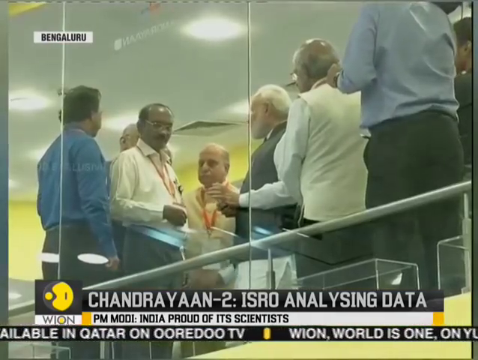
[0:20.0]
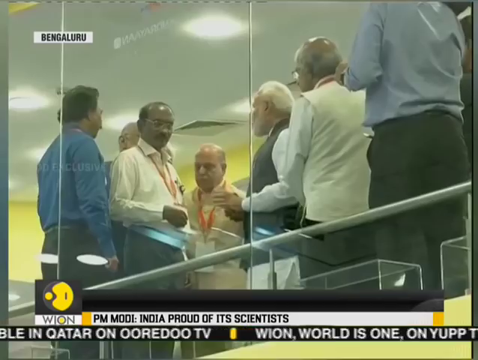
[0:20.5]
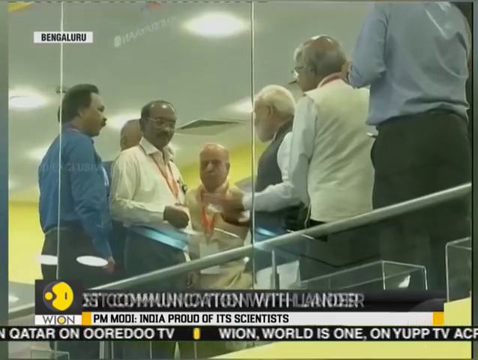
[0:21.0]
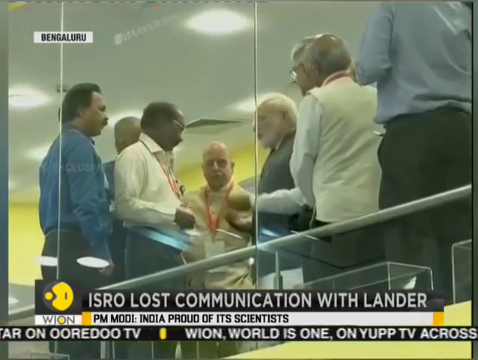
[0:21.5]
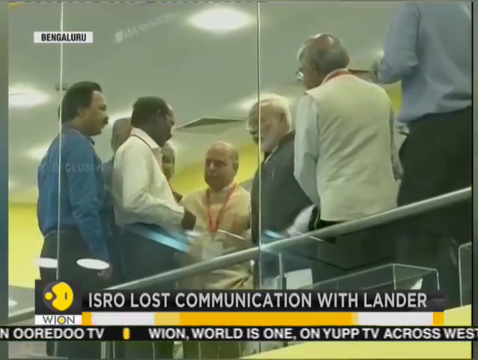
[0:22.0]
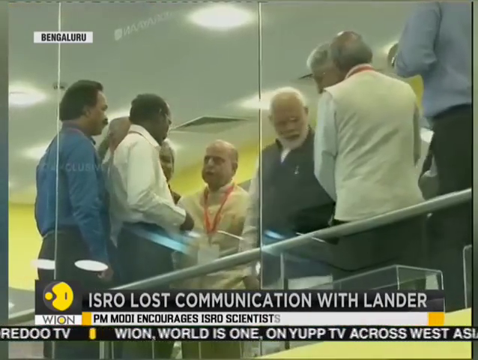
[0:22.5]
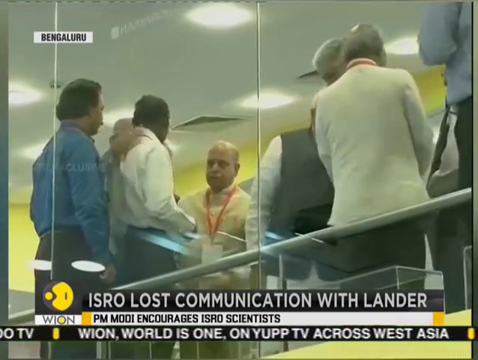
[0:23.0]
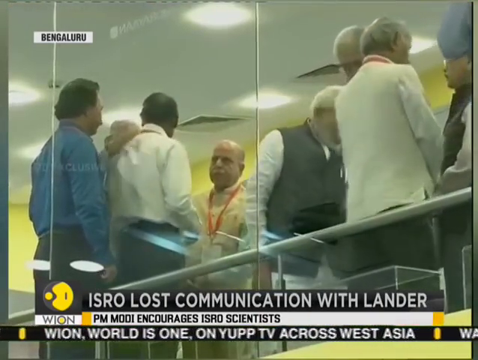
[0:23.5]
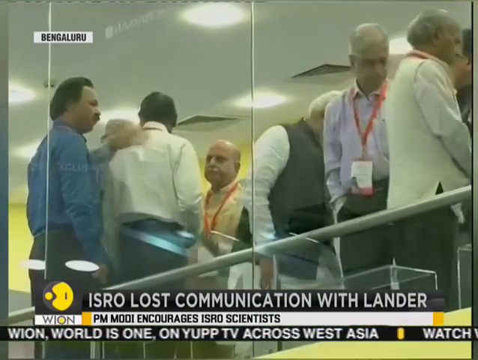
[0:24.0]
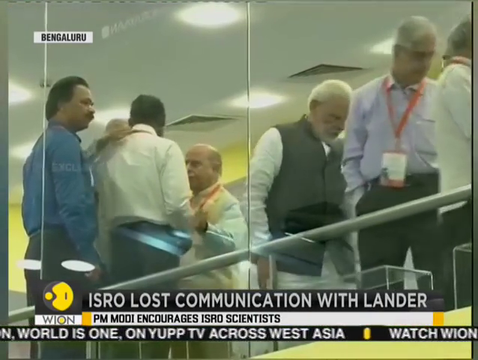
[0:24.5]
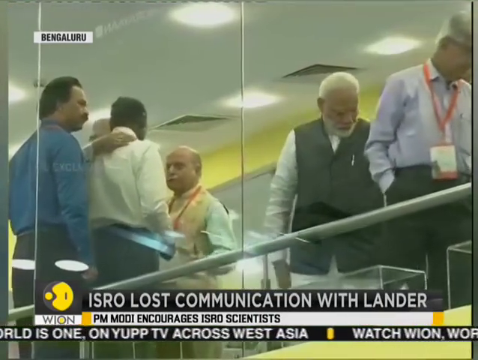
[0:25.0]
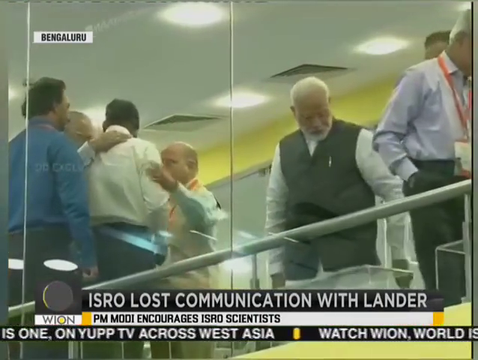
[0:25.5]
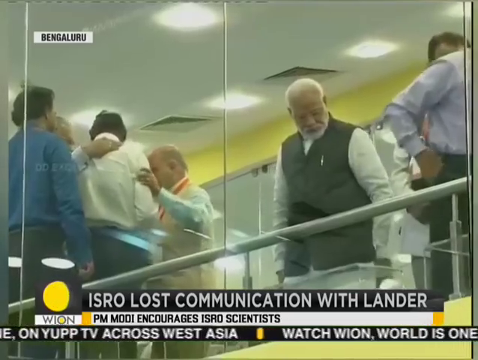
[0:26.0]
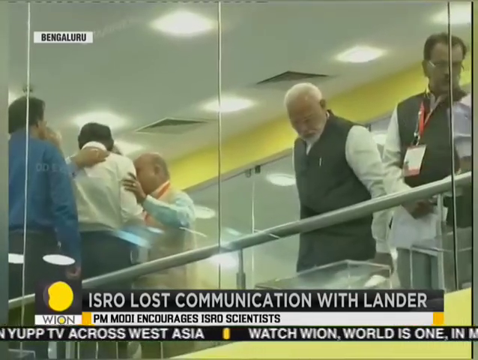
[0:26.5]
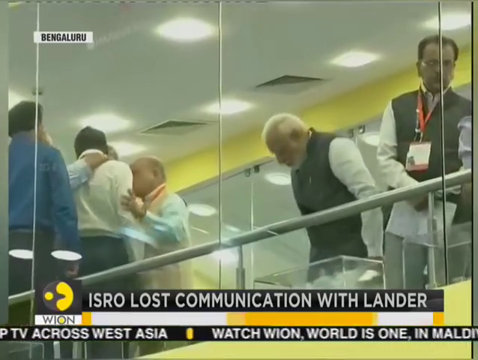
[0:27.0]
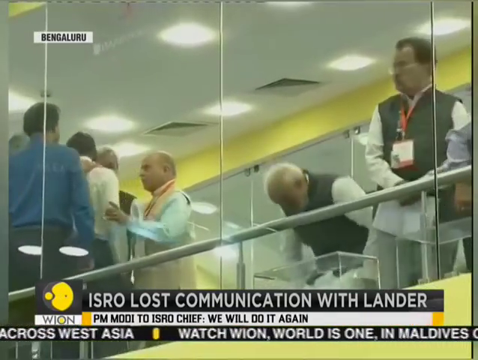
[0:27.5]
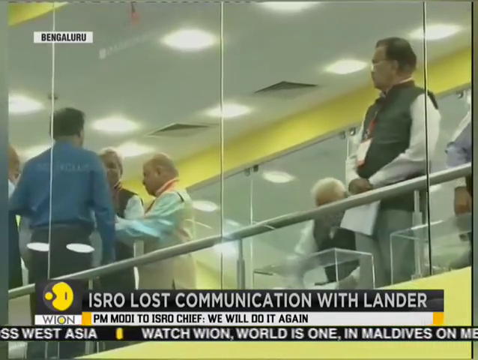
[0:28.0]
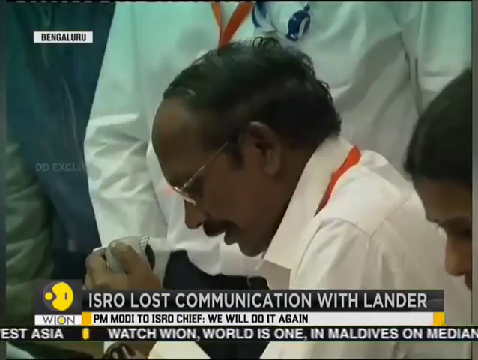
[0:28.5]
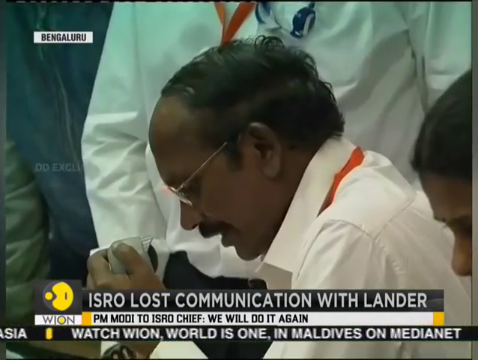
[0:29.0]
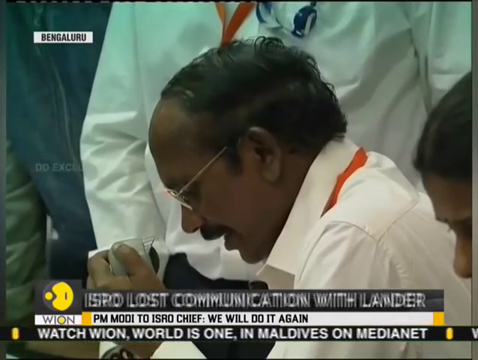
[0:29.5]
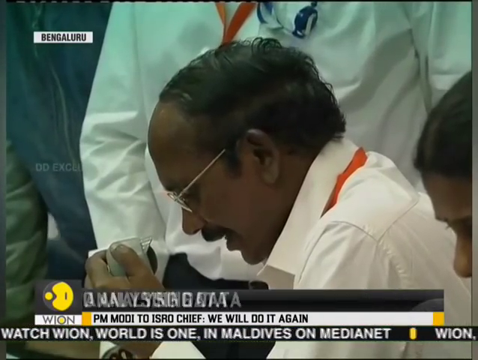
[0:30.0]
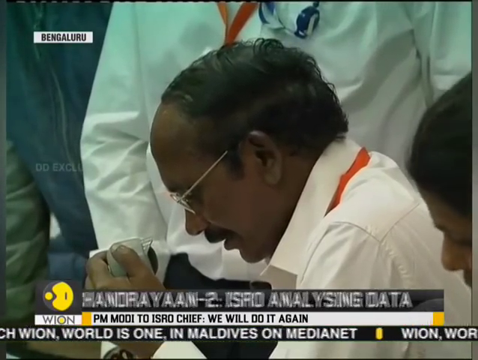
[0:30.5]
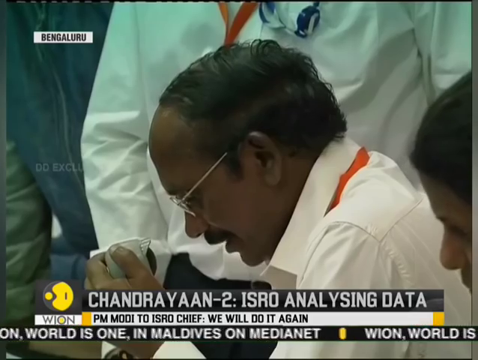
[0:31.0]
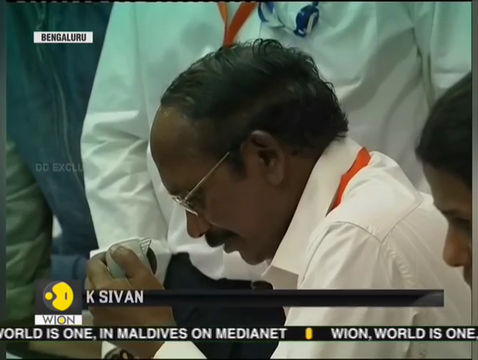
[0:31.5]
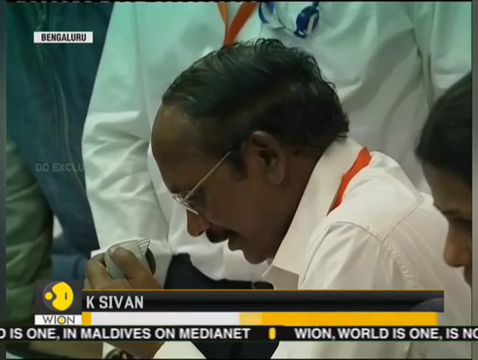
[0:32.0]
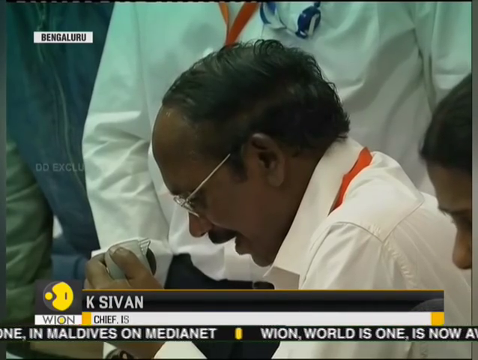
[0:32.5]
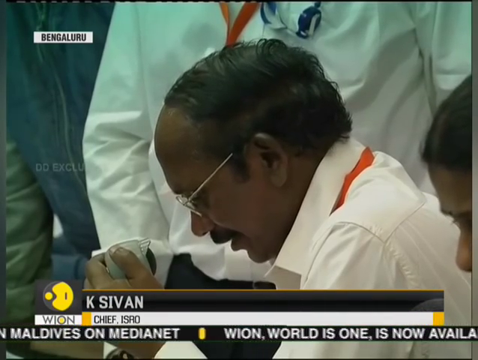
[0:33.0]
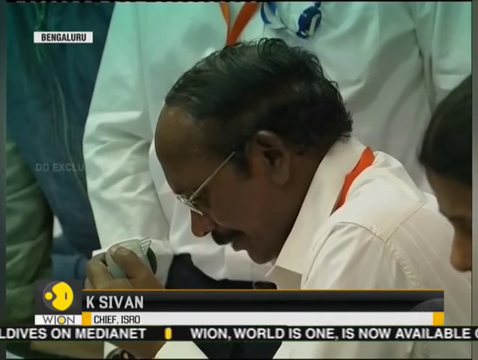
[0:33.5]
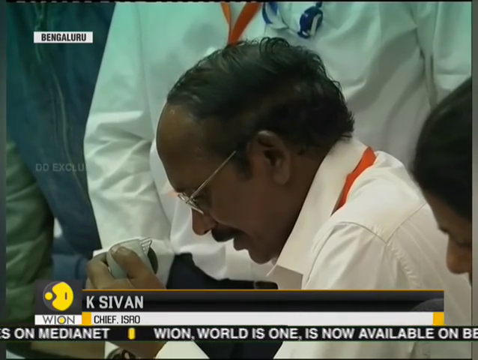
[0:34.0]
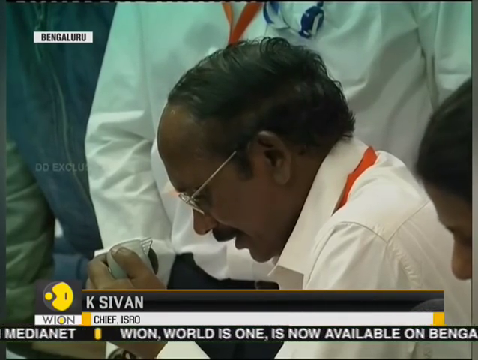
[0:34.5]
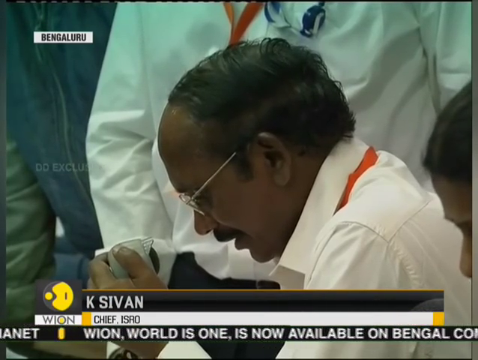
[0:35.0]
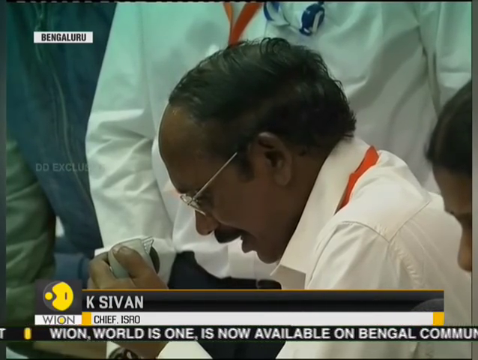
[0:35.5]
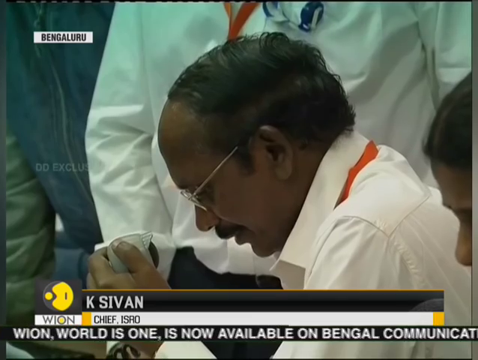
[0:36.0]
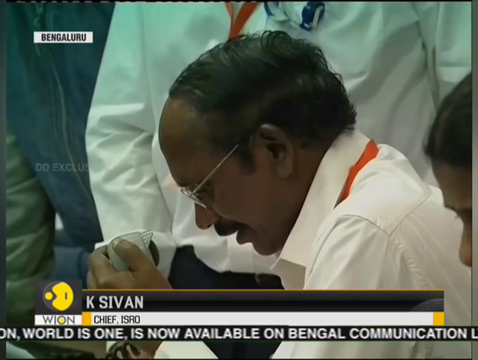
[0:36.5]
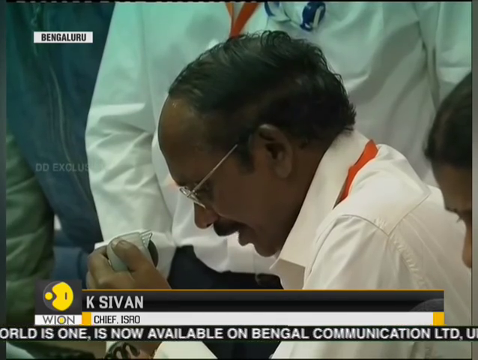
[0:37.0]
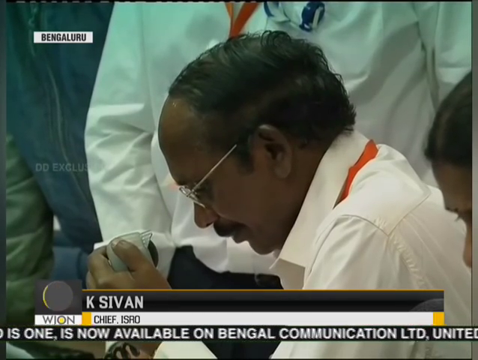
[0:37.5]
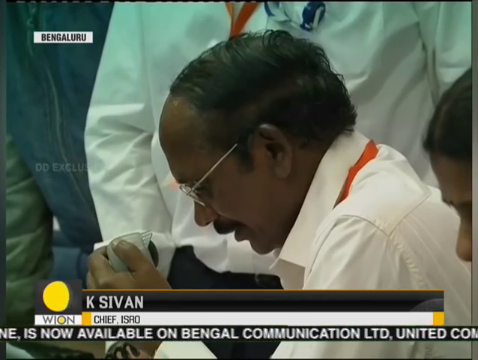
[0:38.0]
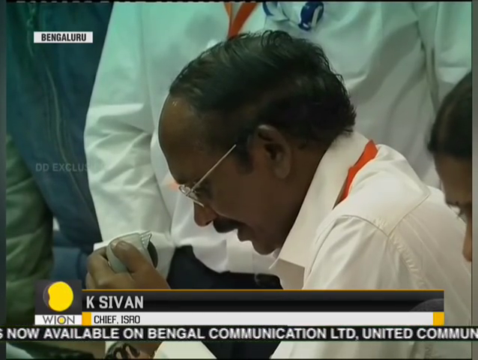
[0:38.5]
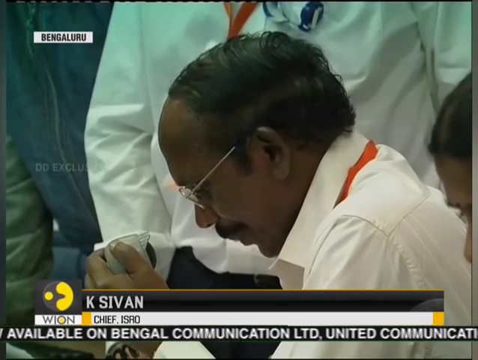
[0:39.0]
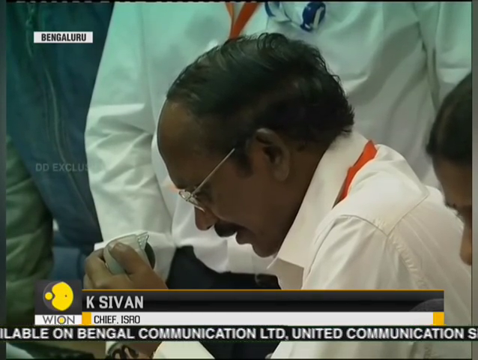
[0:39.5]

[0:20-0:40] The WION (World is One) News report on the Chandrayaan moon landing continues. Prime Minister Modi is visible through the glass, with the group inside. He wears a vest over what appears to be a dress shirt or khadi-type top, and pants. The man from before is shown again; he is K. Shivan, the ISRO chief, and he is the one talking into the microphone.